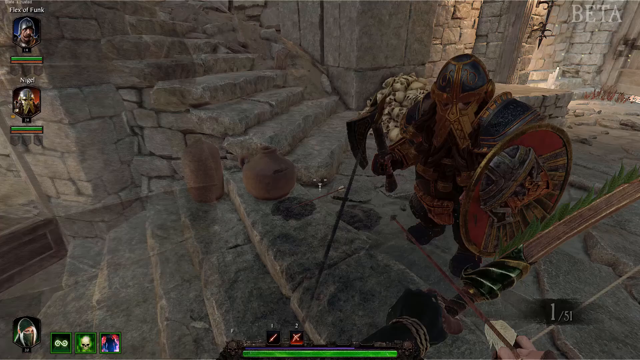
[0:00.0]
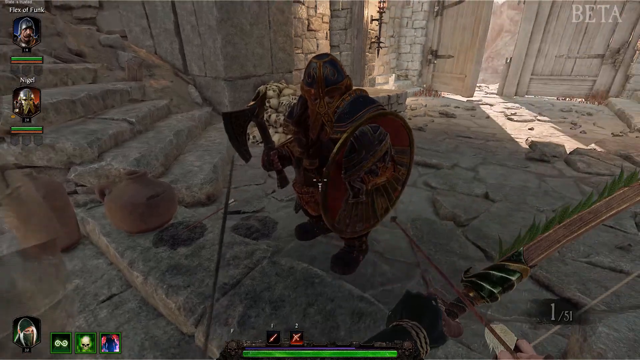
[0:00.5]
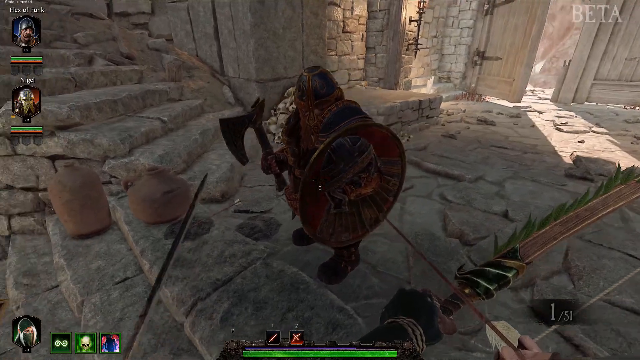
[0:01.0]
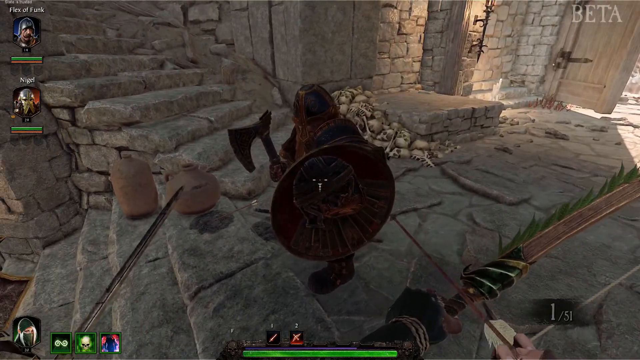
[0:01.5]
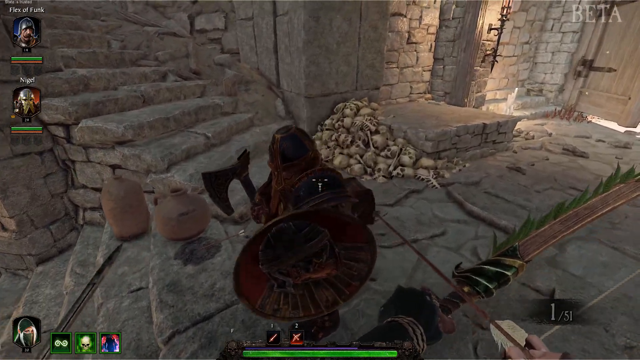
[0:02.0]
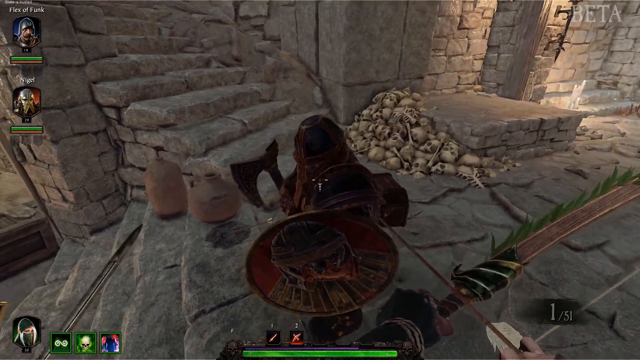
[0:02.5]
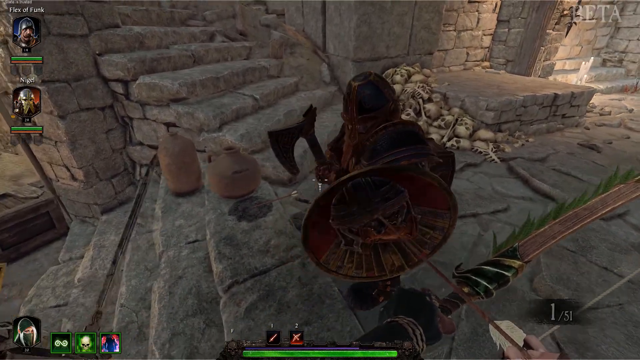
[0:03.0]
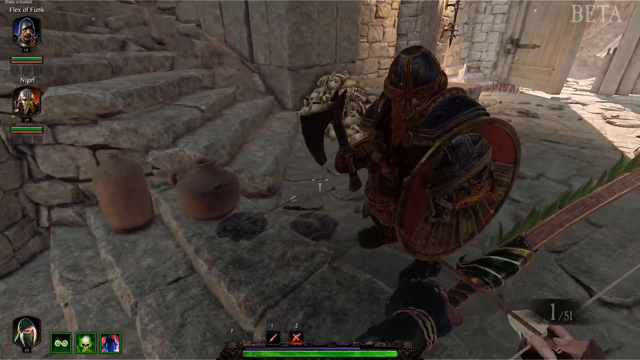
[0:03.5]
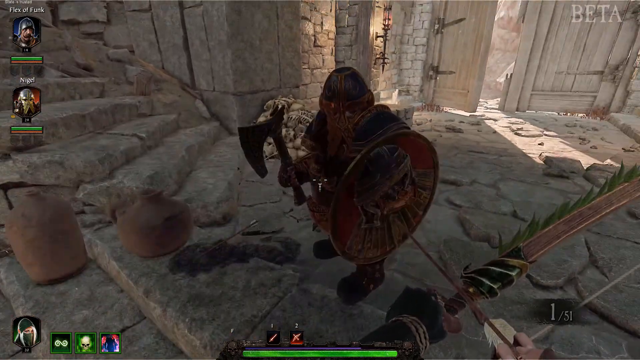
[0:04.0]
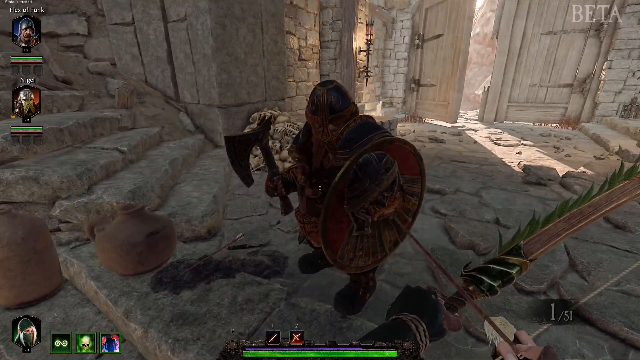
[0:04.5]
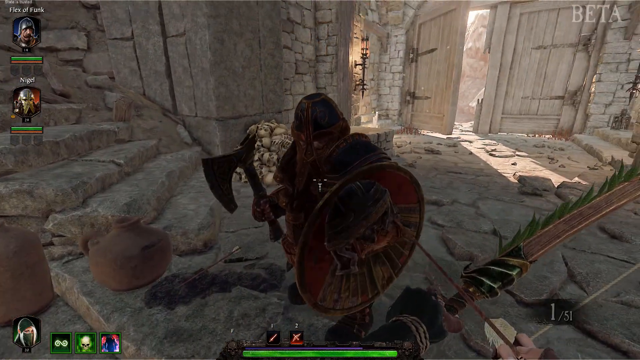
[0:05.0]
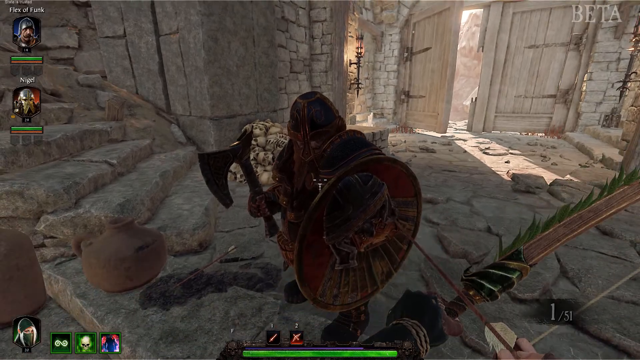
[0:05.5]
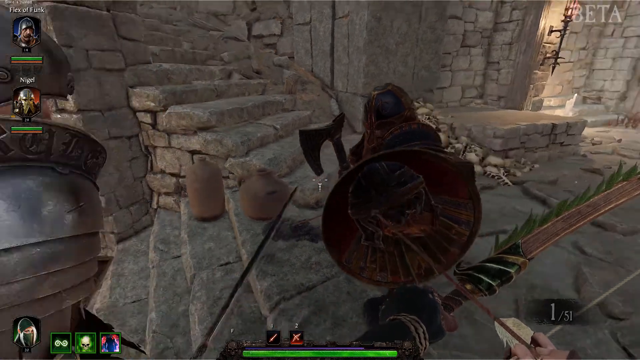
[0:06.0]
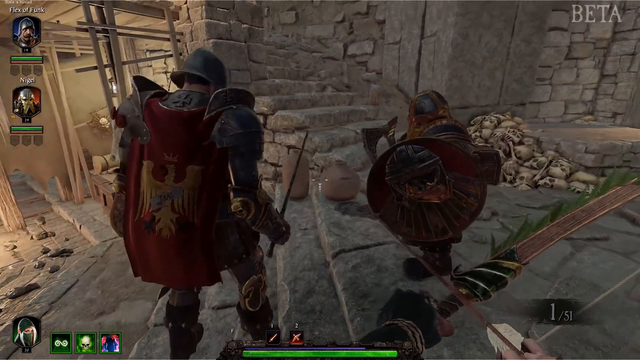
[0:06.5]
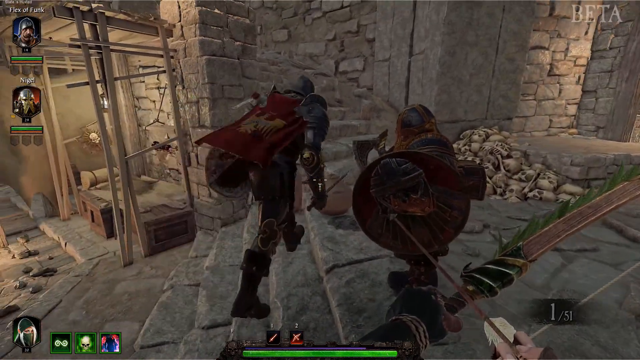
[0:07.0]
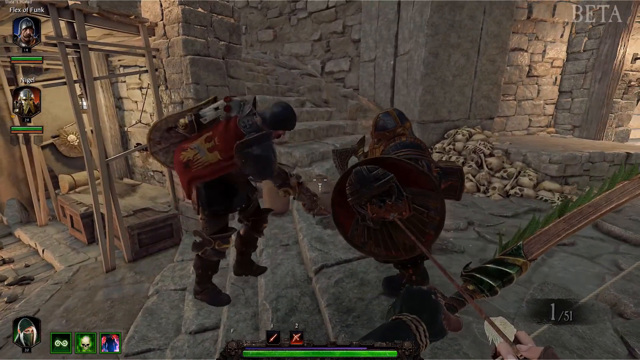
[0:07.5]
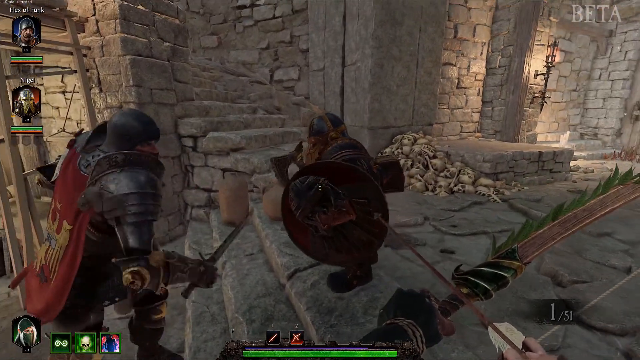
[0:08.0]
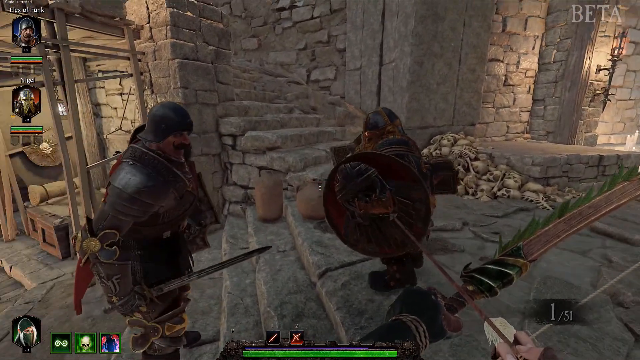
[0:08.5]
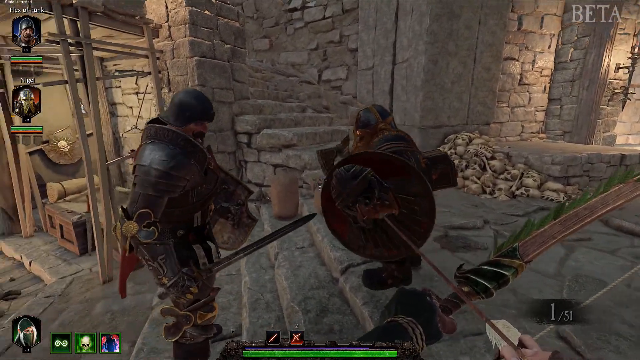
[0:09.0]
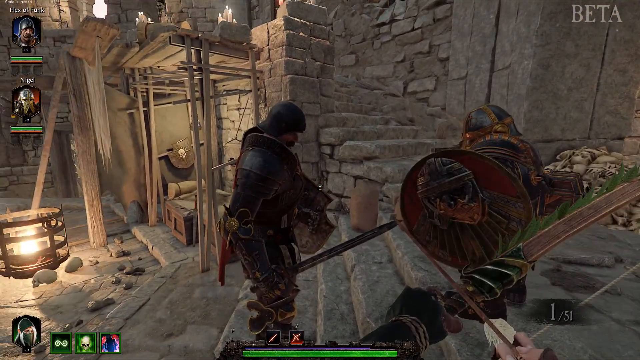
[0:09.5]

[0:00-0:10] This gameplay appears to be set around medieval times. There are three characters on screen, and the view is from the point of view of a character who apparently has a sword. One figure has a sword, and another holds an unidentified object and wears armor to protect himself. They seem to be trying to hit each other, and he seems to be protecting himself. One character is apparently named Nigel, based on the health display; the health is green, and the red apparently represents damage to him. The name Flex of Flunk also appears, the character who is trying to attack Nigel. The character being played is apparently a woman character, though her name is not shown.